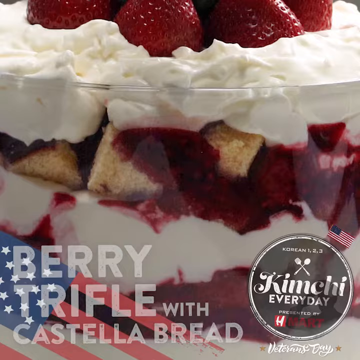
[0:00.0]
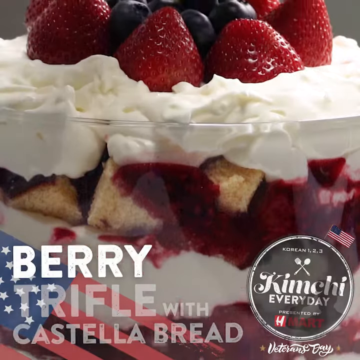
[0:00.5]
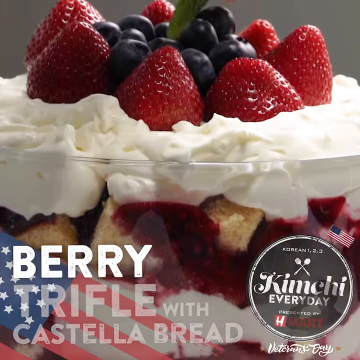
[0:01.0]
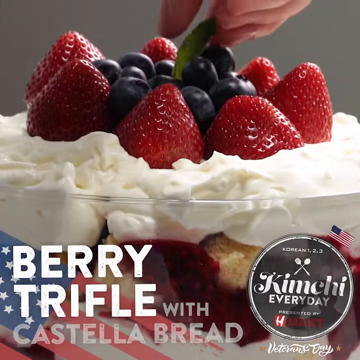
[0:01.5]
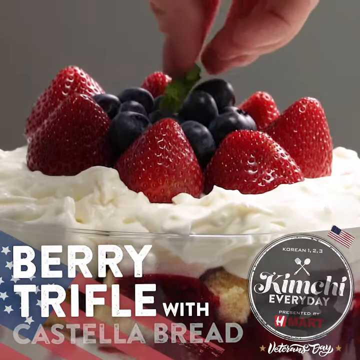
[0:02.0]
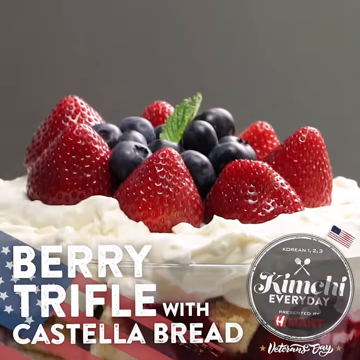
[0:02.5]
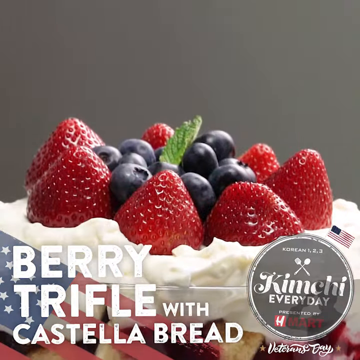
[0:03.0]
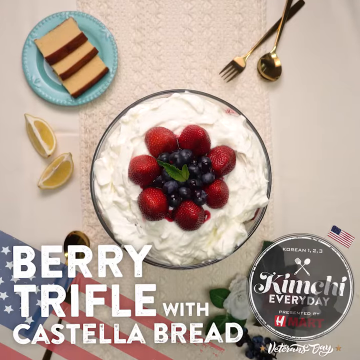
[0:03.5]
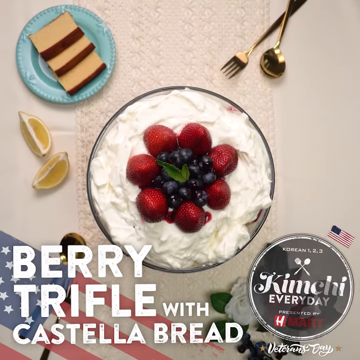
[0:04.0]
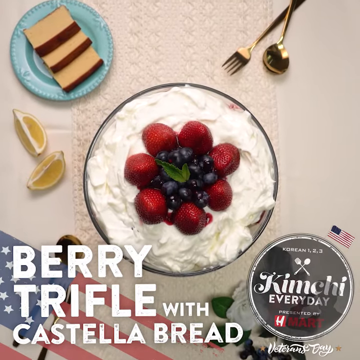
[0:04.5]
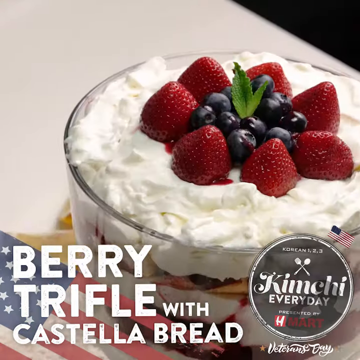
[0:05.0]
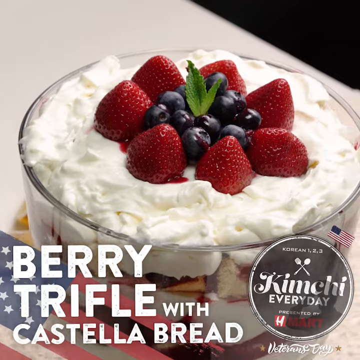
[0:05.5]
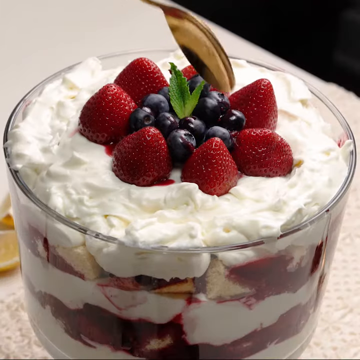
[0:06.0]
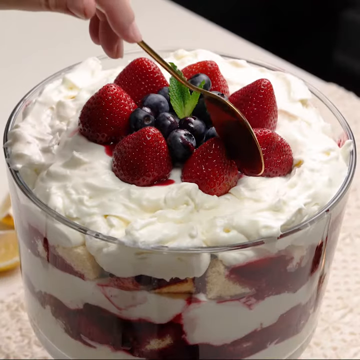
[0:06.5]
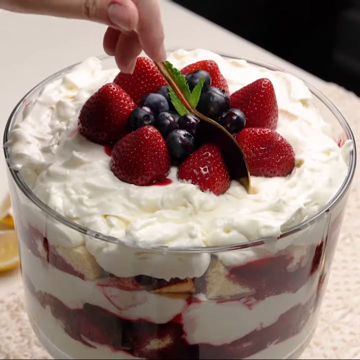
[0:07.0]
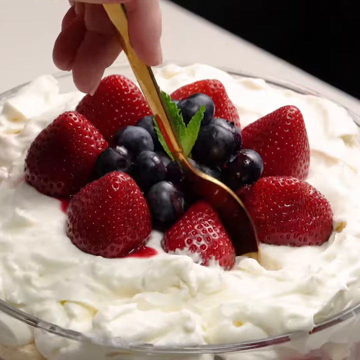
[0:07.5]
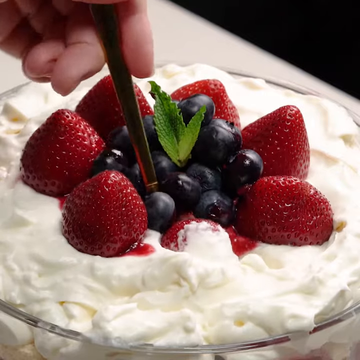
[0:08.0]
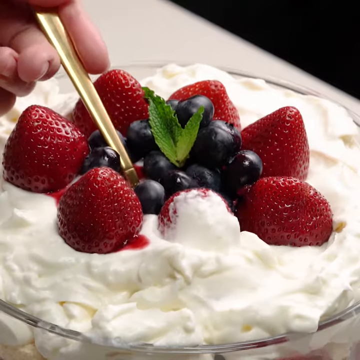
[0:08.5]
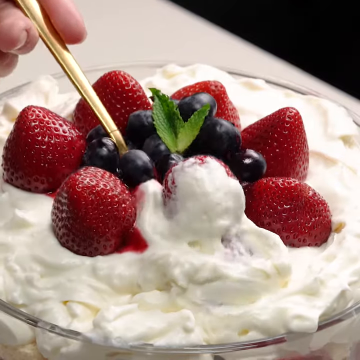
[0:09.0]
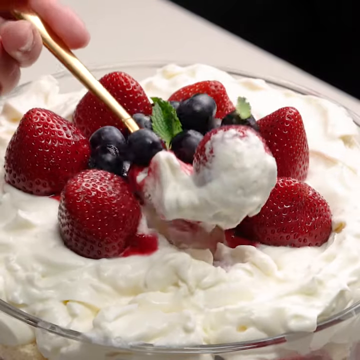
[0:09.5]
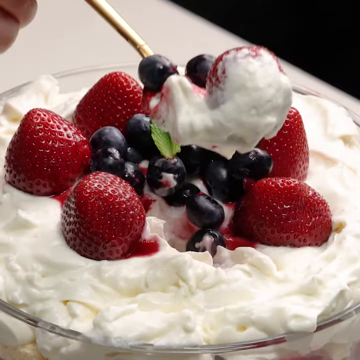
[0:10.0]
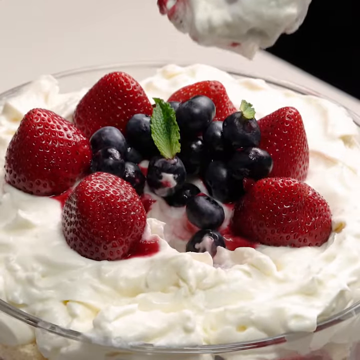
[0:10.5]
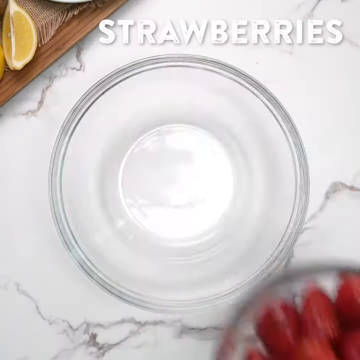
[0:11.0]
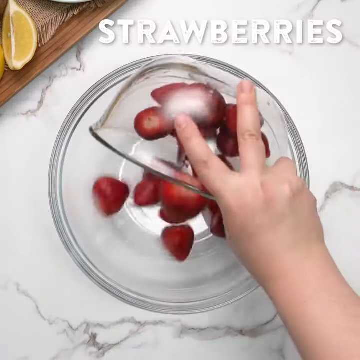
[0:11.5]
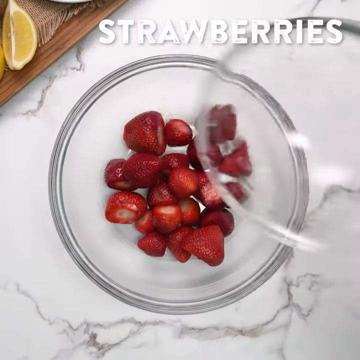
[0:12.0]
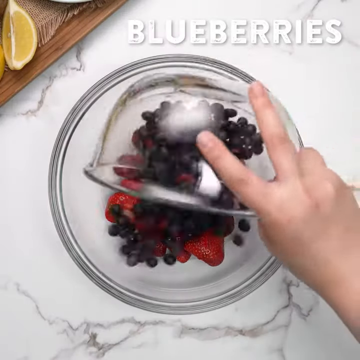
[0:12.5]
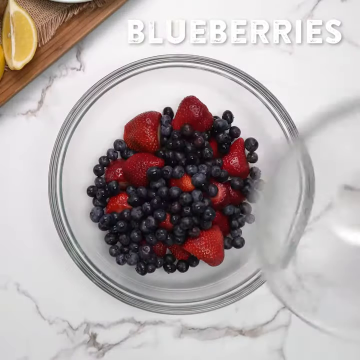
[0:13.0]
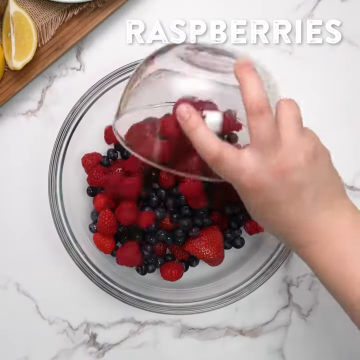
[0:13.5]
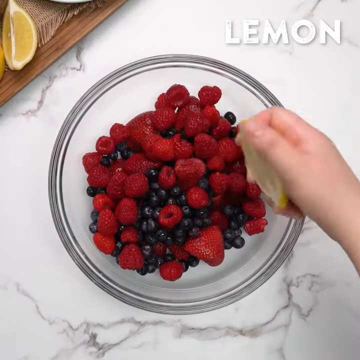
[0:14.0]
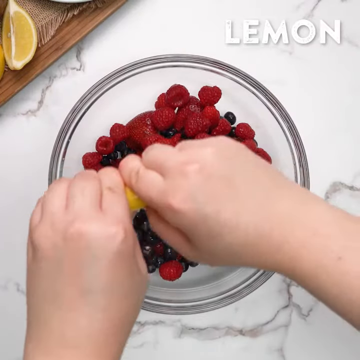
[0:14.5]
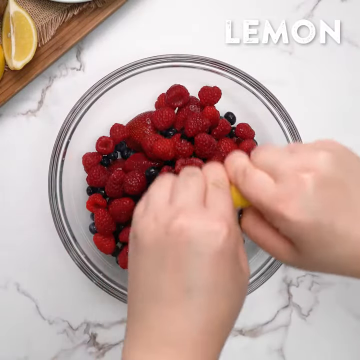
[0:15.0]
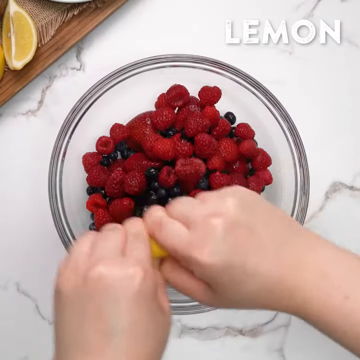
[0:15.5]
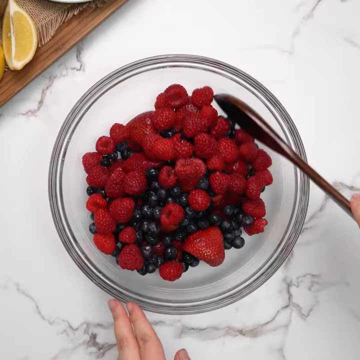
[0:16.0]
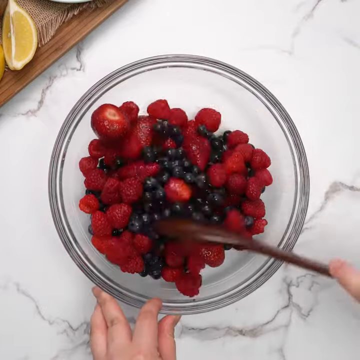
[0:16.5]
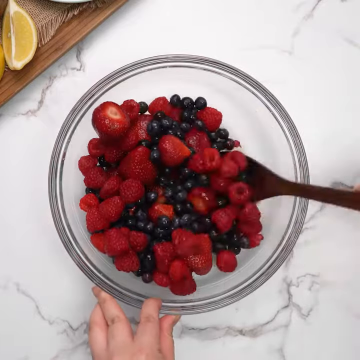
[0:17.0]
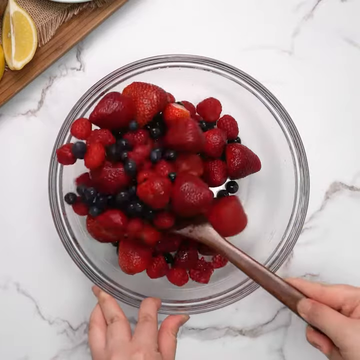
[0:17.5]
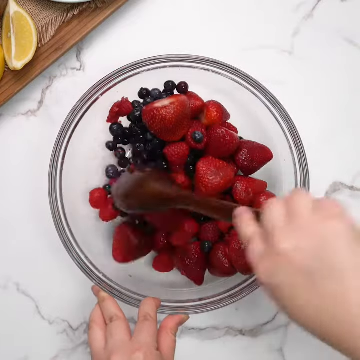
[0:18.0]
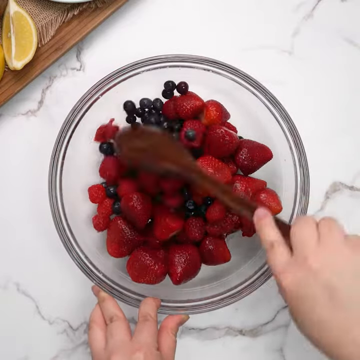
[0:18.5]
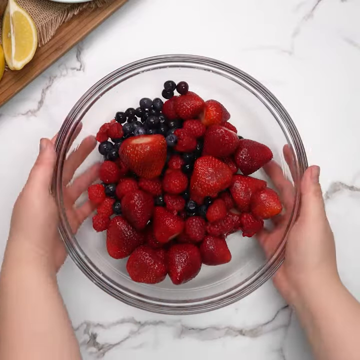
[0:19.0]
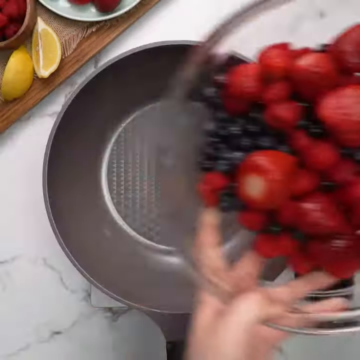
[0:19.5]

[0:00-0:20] The video opens on a close-up of what appears to be a dessert in a dish, with the camera panning from bottom to top. Strawberries and blueberries rest on a bed of what appears to be either cream cheese or Cool Whip; below that is another layer of berries, and below that a layer of the Cool Whip mixture. In the lower left-hand corner the text reads "Berry Trifle," and in the lower right-hand corner a round circle says "Kimchi Every Day." A person places a piece of parsley in the center of the blueberries, which are flanked by a strawberry border. The camera pans away to show a dining room table with a fork and a spoon, a plate with bread on it, and two sliced lemons. After a few seconds, a person dips a spoon into the dessert and lifts up a single strawberry. The camera then cuts to a different scene where a bowl rests on a white marble countertop. A person puts strawberries in the bowl, then blueberries, then raspberries, spritzes on lemon, and mixes it all with a spatula.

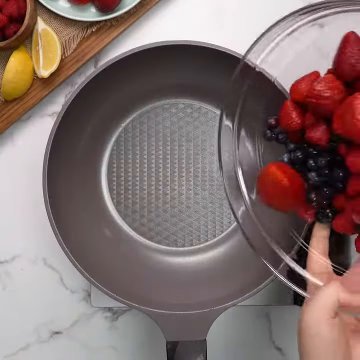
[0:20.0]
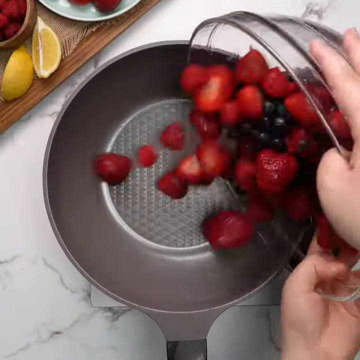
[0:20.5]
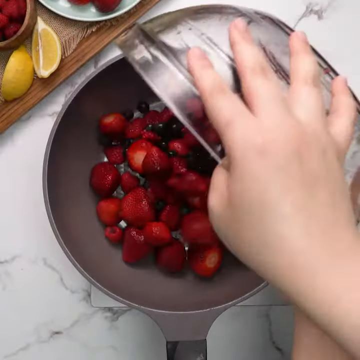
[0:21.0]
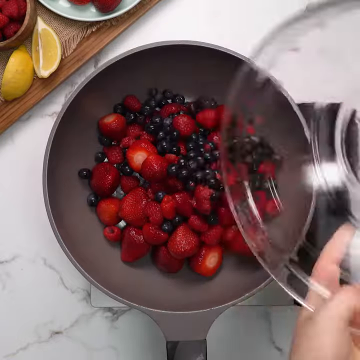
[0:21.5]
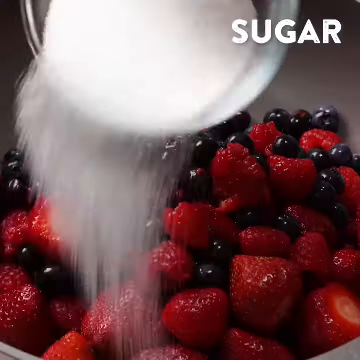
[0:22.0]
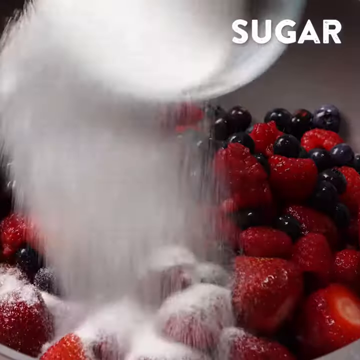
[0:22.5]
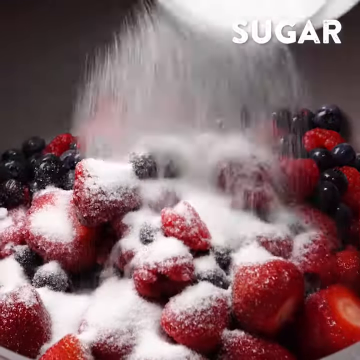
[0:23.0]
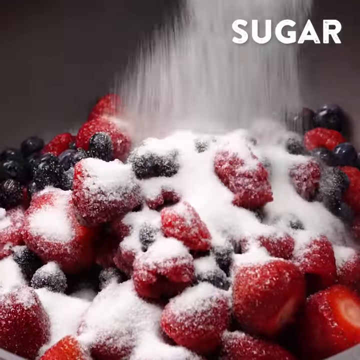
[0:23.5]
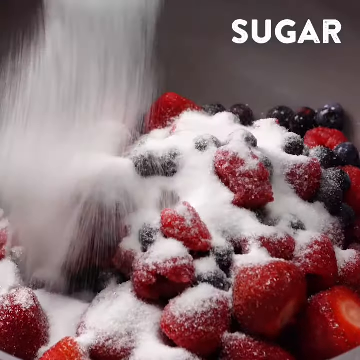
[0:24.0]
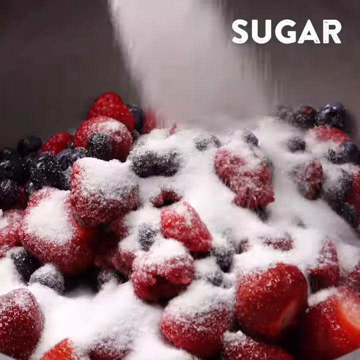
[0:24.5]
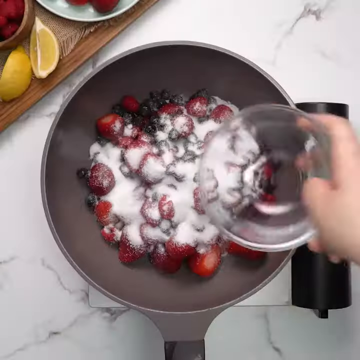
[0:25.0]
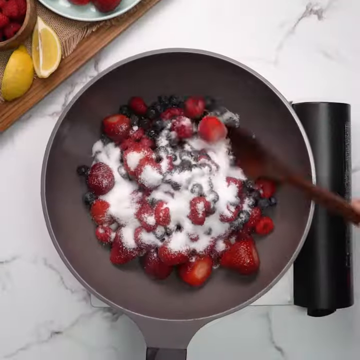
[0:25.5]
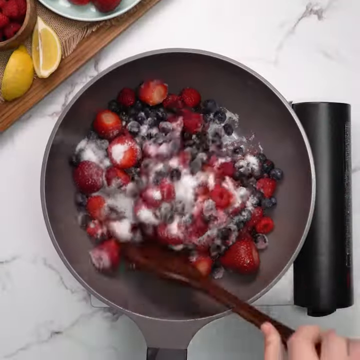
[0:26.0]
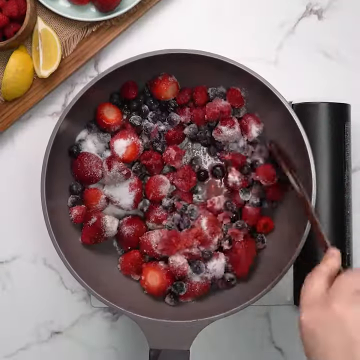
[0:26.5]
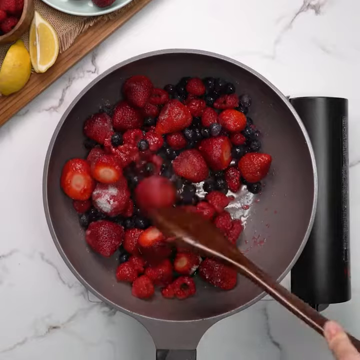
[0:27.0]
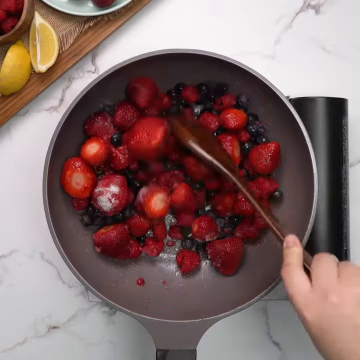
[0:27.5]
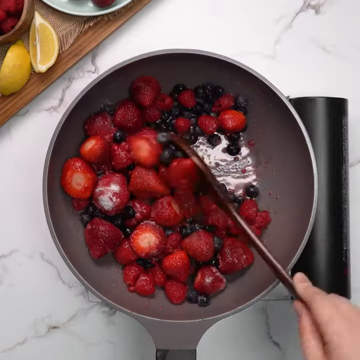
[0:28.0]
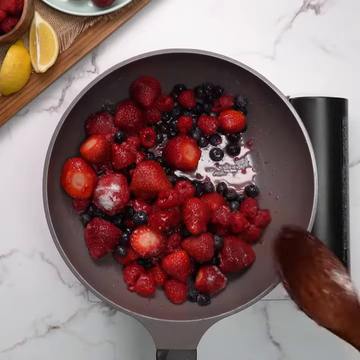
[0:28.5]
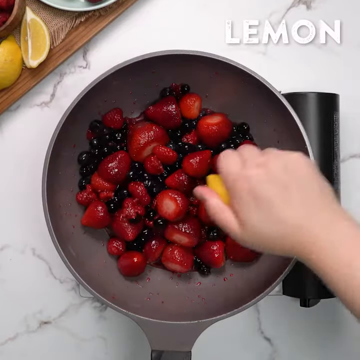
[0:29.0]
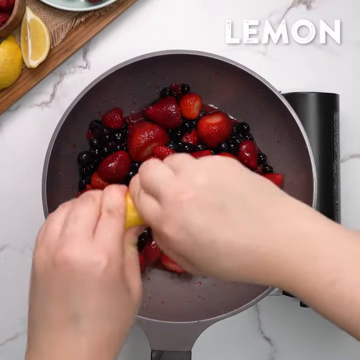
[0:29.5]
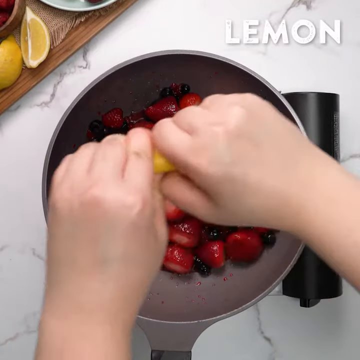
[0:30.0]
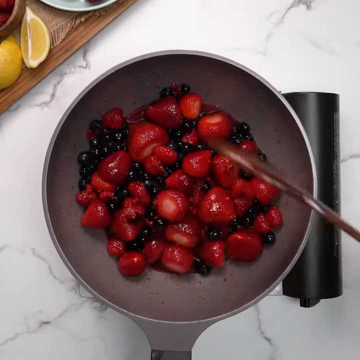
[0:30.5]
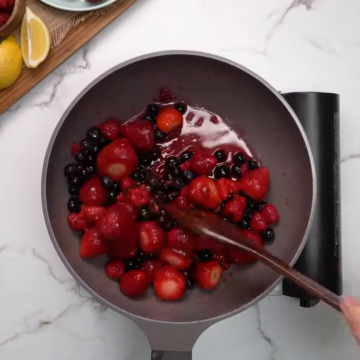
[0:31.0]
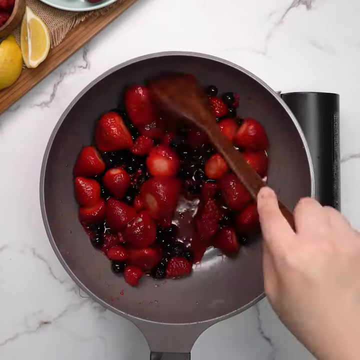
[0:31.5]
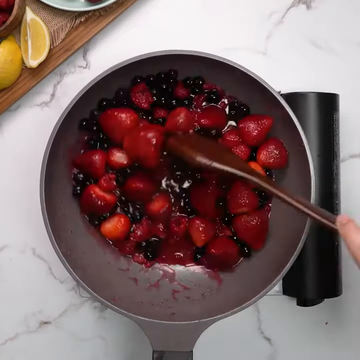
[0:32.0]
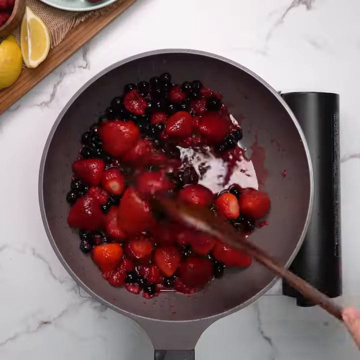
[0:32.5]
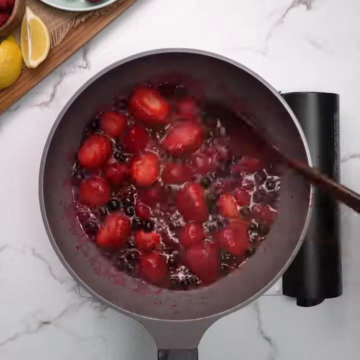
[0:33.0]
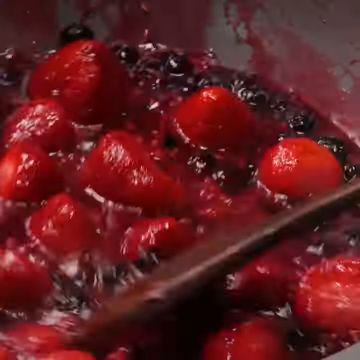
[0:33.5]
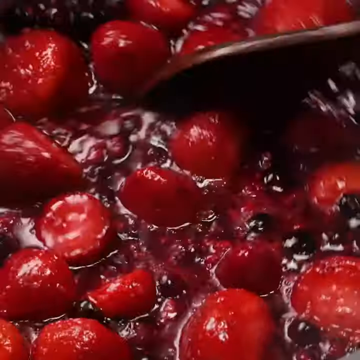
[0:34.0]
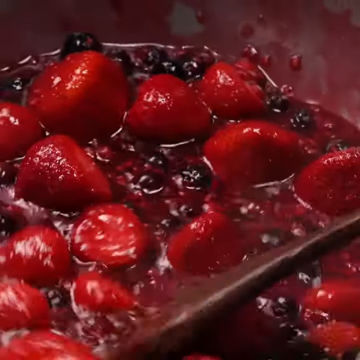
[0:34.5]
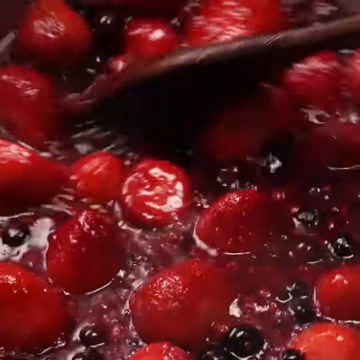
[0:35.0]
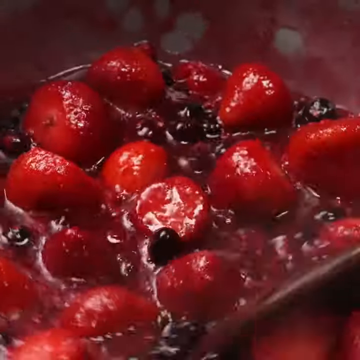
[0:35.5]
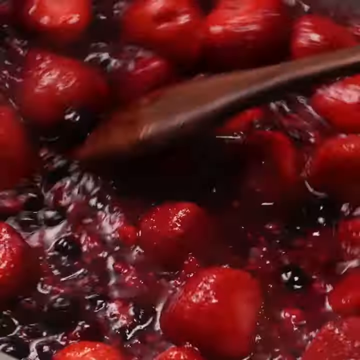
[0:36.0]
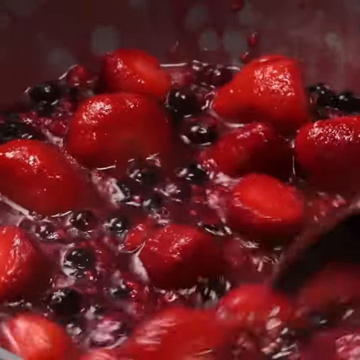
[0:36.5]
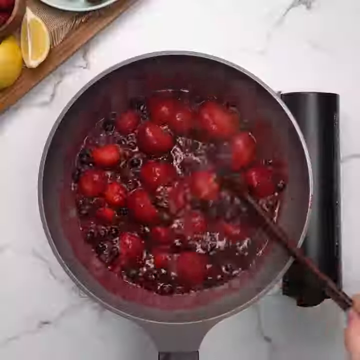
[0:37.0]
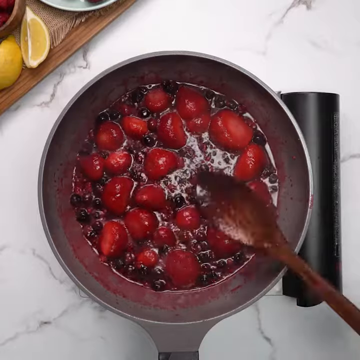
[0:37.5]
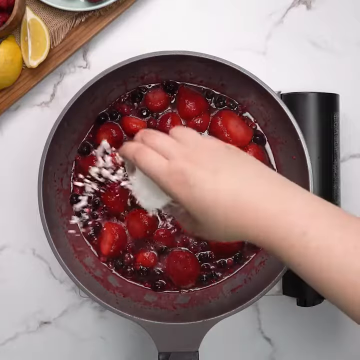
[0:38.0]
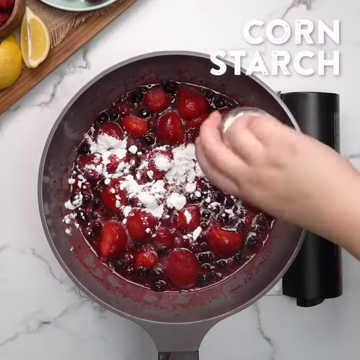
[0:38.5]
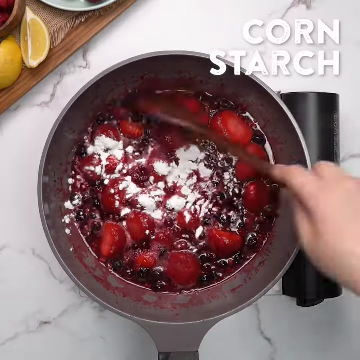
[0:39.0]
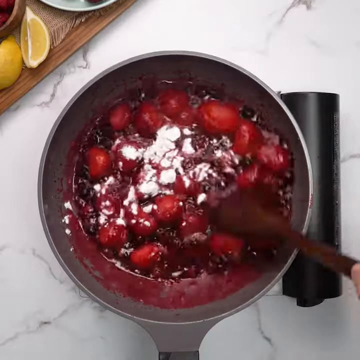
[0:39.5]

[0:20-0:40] A pan rests on a white marble countertop while a person holds a clear bowl containing strawberries, blueberries, and raspberries. They toss the fruit into the pan and sprinkle on sugar, as the word "sugar" appears in all capital letters in the upper right-hand corner of the screen. Using a brown spatula, the person mixes the sugar into the fruit, then squeezes a piece of lemon over the top and keeps mixing until it becomes a soupy-like mixture. They mix in some cornstarch as well, and "cornstarch" is displayed in all capital white letters in the upper right-hand corner.